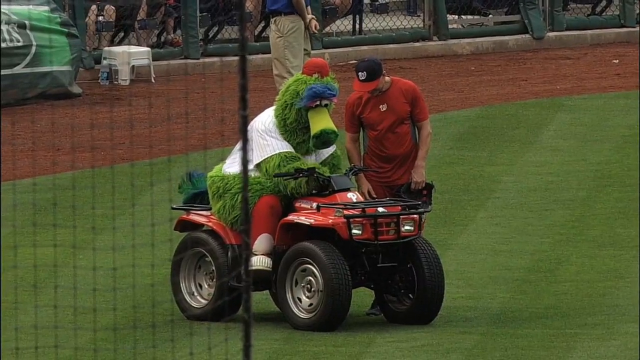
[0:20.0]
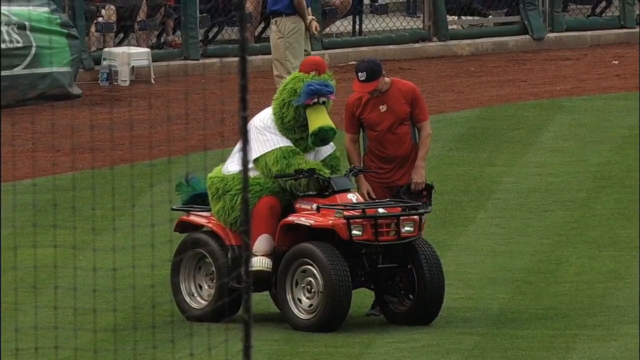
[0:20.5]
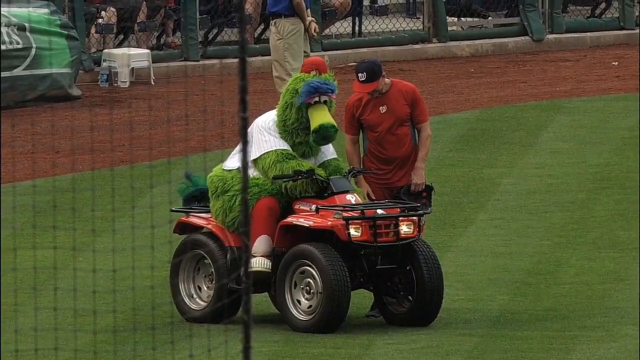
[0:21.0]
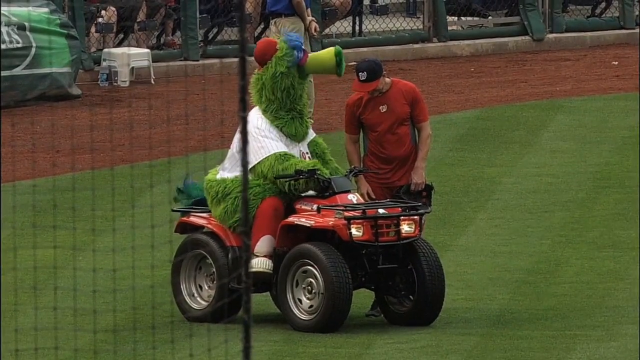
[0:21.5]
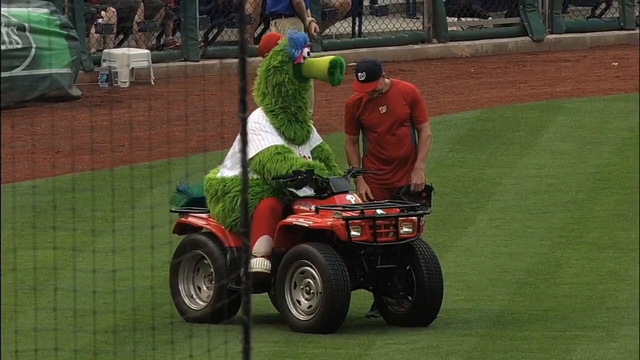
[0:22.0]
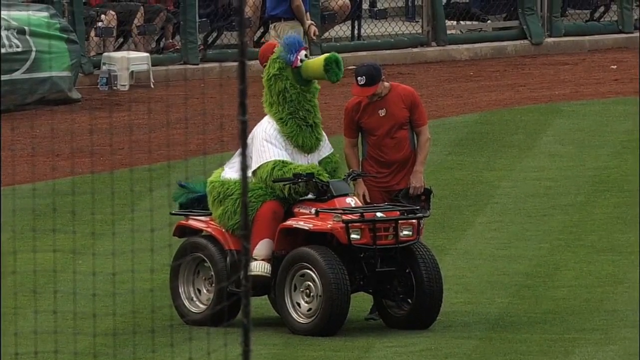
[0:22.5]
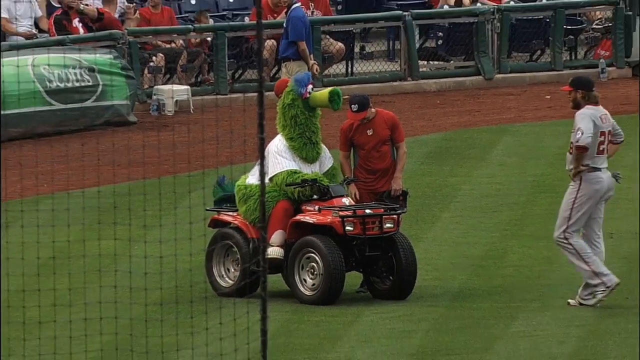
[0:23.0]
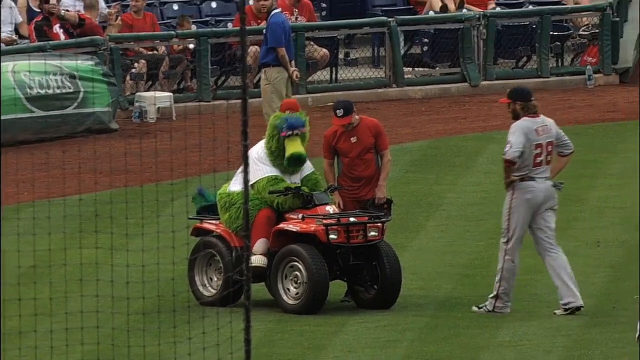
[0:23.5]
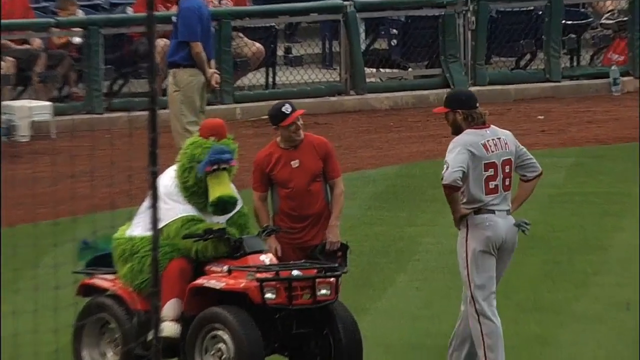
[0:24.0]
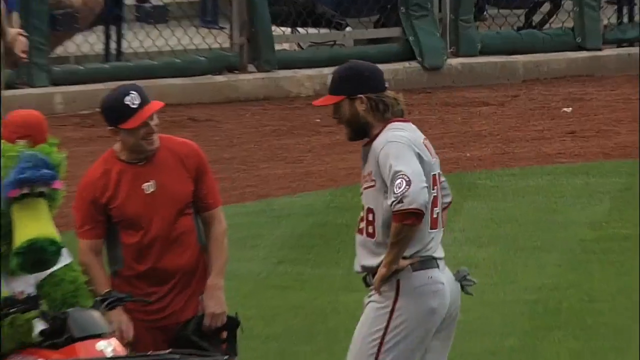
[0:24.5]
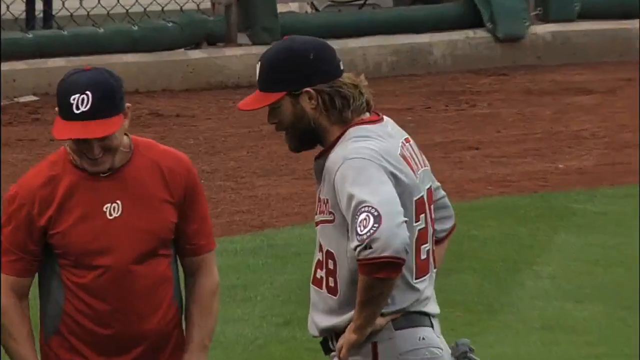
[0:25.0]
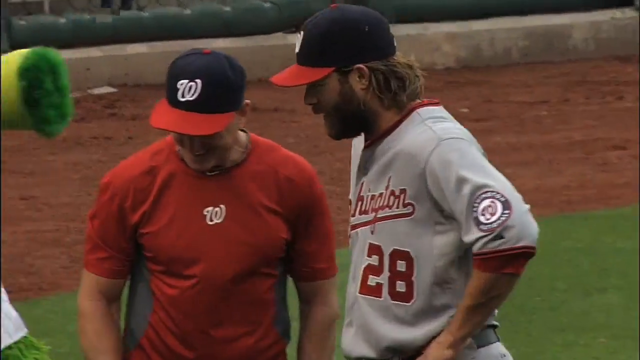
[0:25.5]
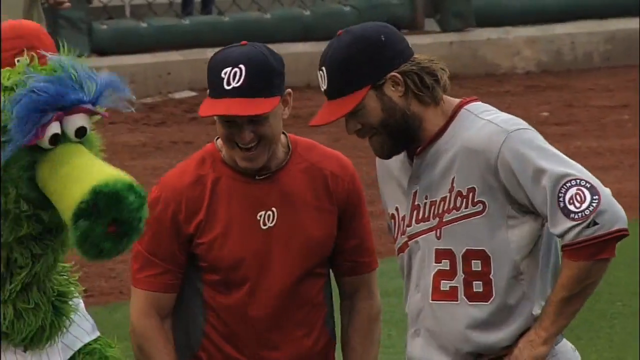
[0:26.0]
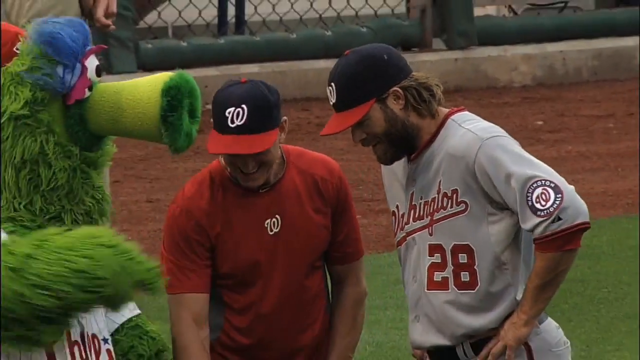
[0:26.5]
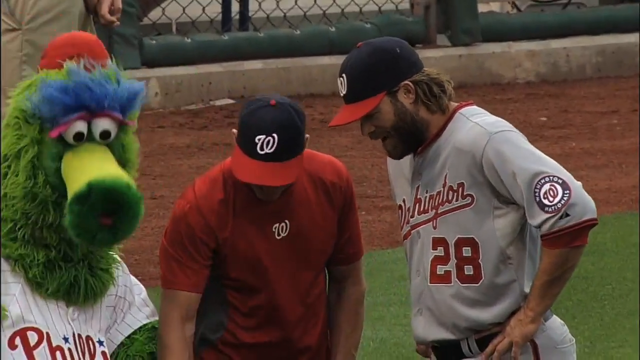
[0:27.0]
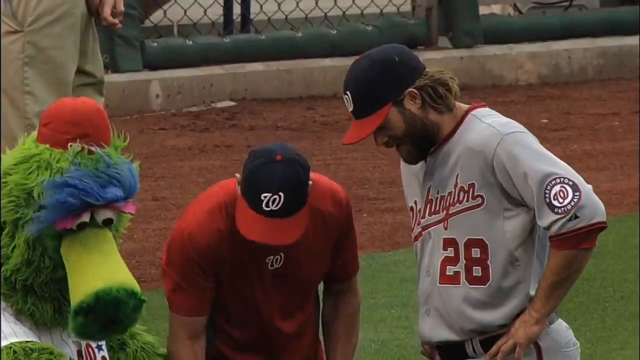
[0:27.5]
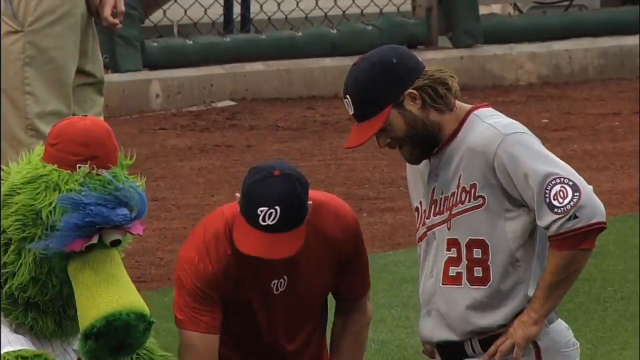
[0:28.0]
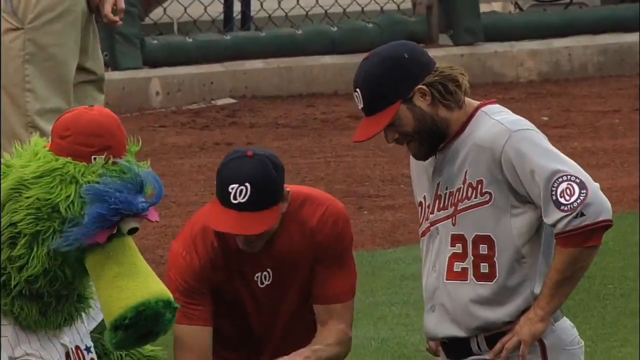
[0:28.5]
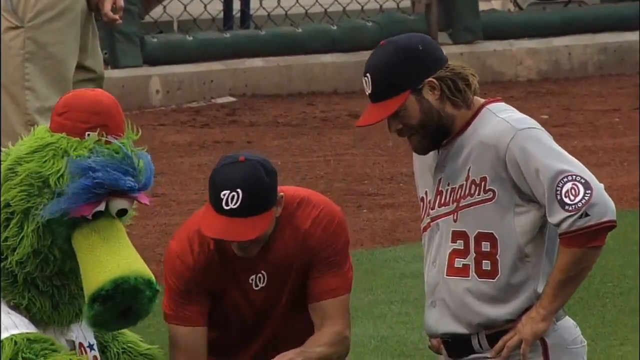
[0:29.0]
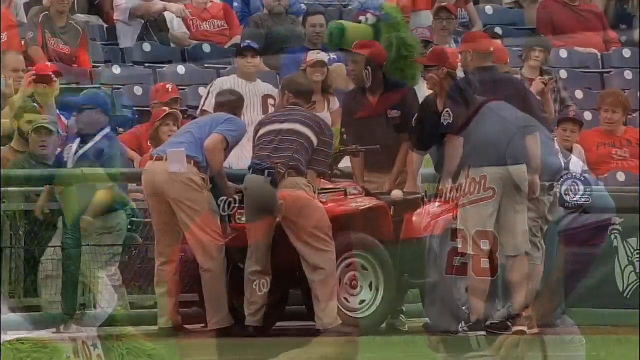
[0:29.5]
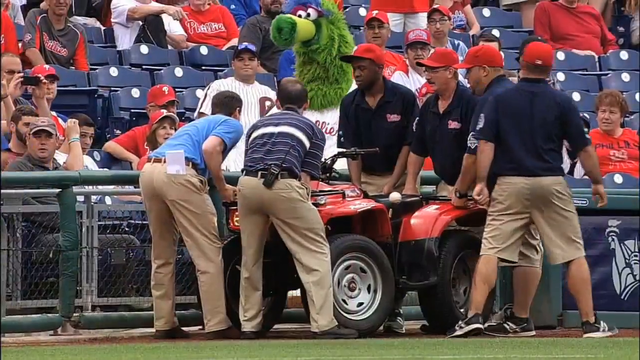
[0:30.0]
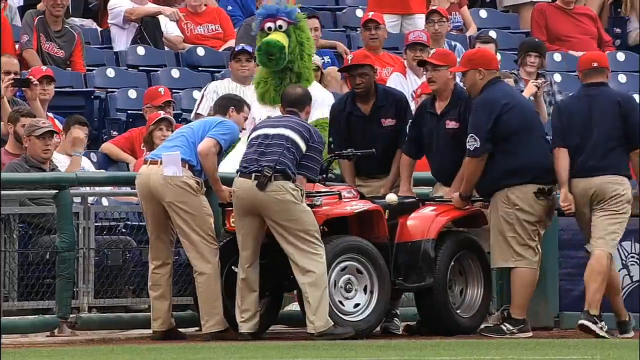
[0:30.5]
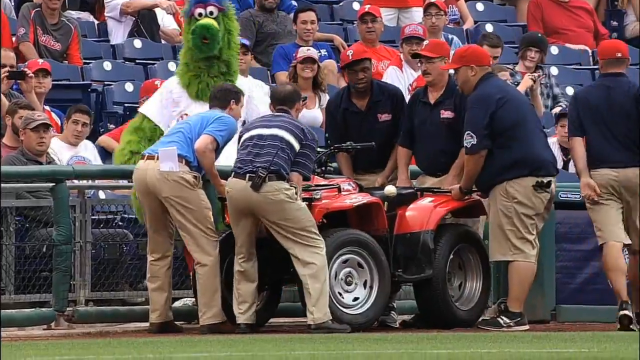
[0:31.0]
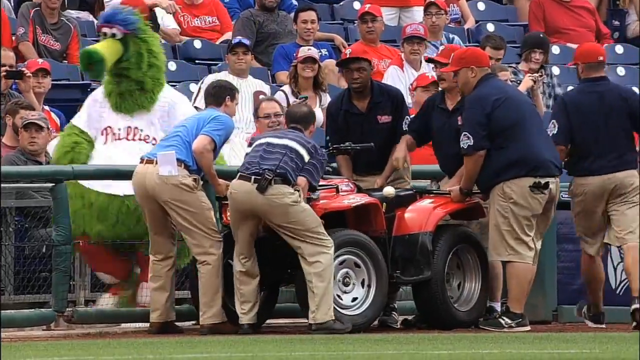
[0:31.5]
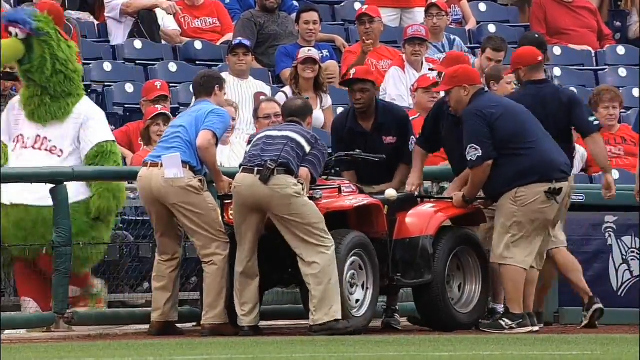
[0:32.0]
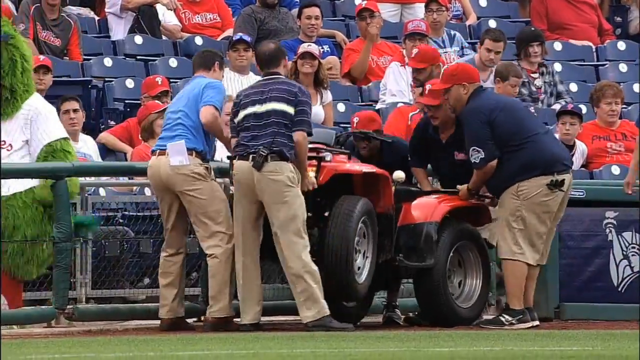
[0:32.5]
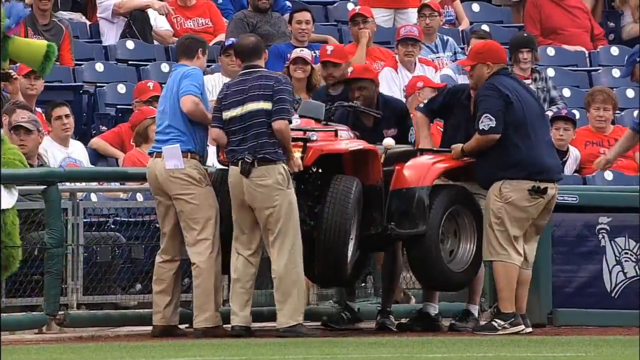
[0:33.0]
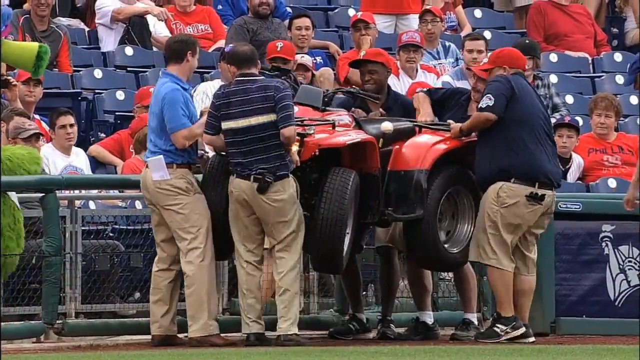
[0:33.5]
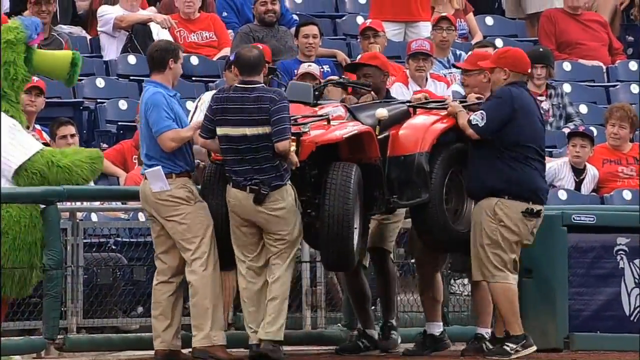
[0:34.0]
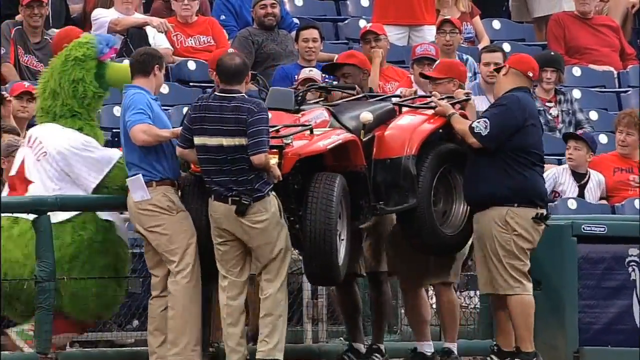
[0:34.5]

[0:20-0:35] The mascot appears to be fixing the bars, having a problem with one of the gadgets on the four-wheeler ATV he is driving. The lights come on, but he cannot get it started; the battery apparently is dead, and he is stuck on the field. He gets off, and about six staff members who have come onto the field appear to carry the heavy ATV off the field. A player from the Washington Nationals comes up, apparently to find out what is going on. The stuck vehicle is apparently delaying the game, and the field seemingly needs to be cleared before the game starts. The ATV is carried off the field.